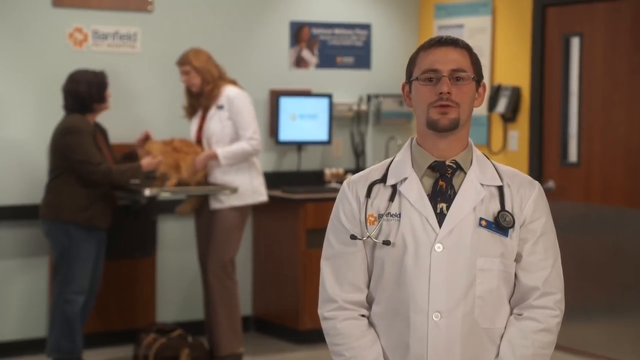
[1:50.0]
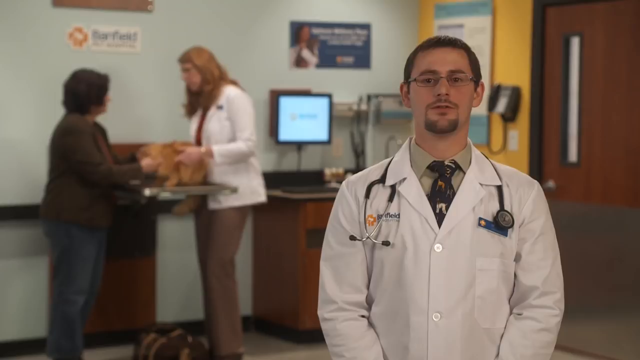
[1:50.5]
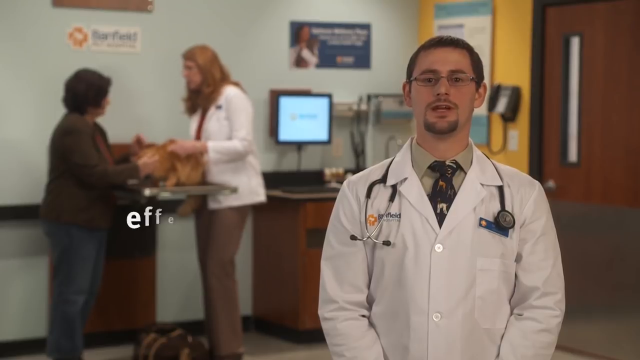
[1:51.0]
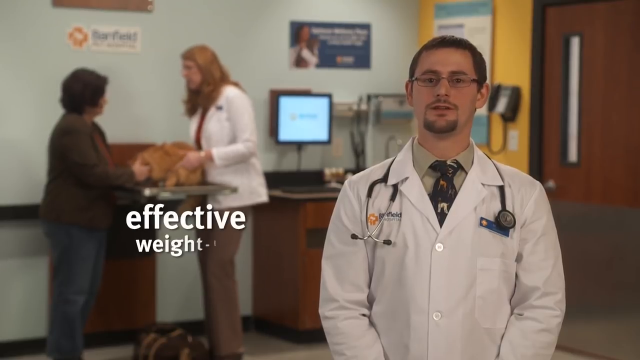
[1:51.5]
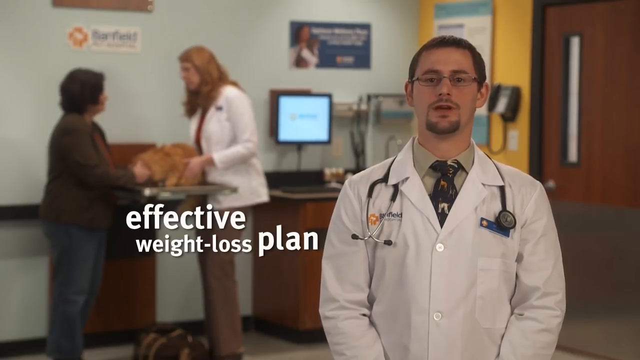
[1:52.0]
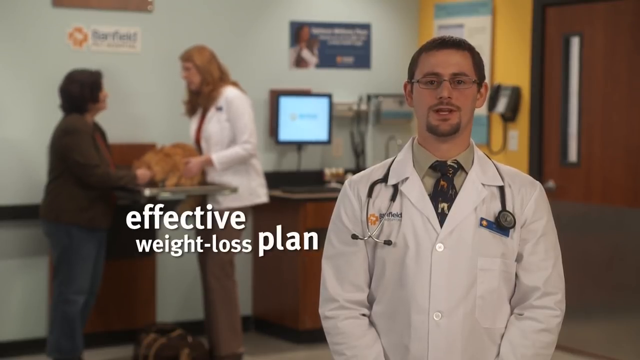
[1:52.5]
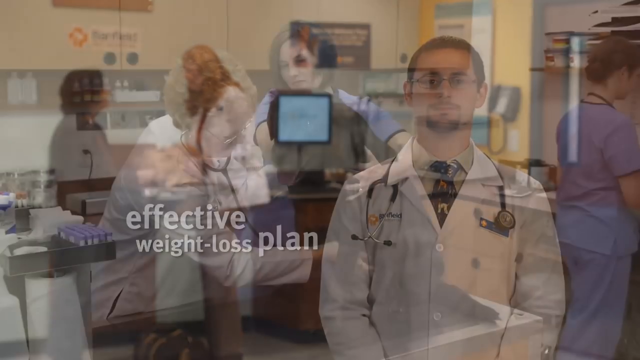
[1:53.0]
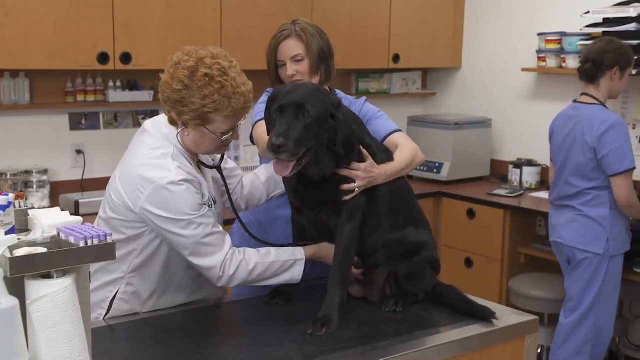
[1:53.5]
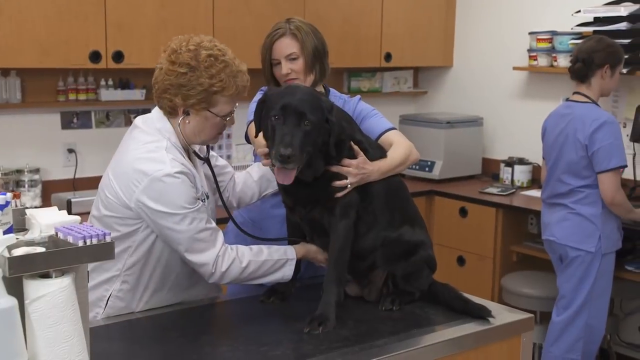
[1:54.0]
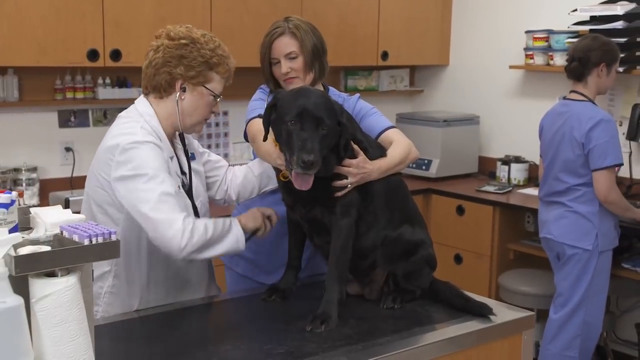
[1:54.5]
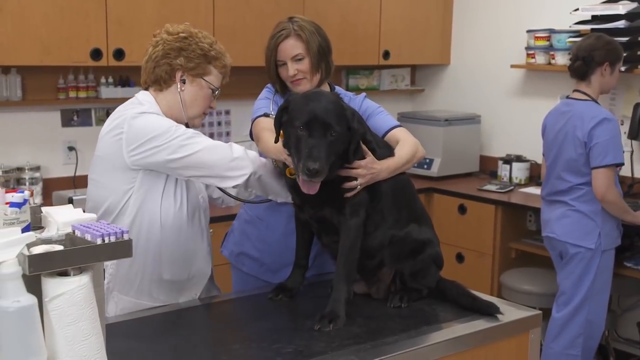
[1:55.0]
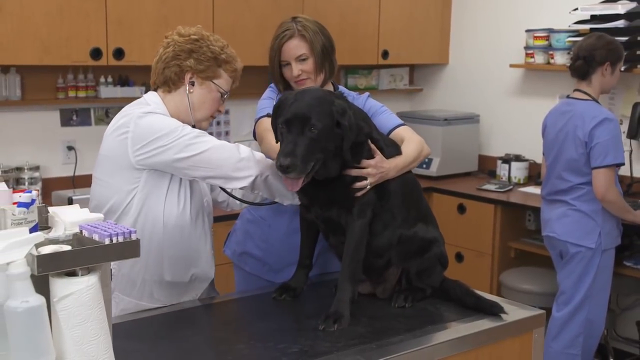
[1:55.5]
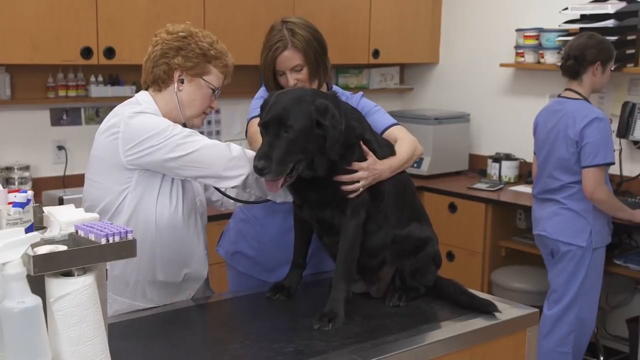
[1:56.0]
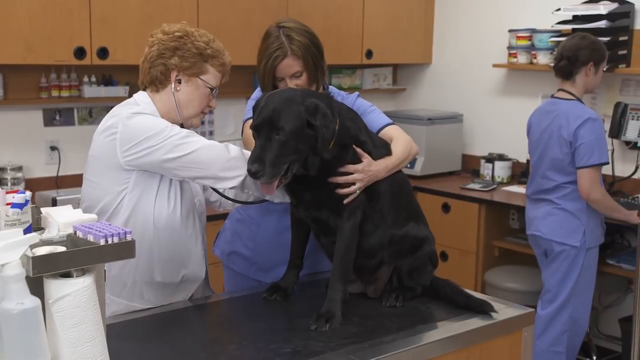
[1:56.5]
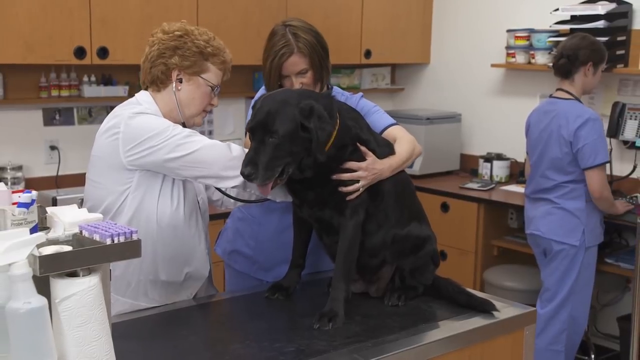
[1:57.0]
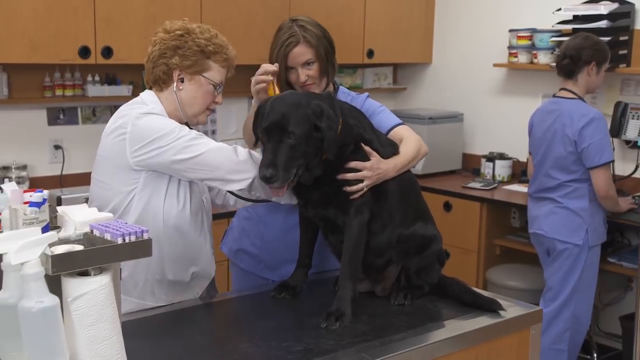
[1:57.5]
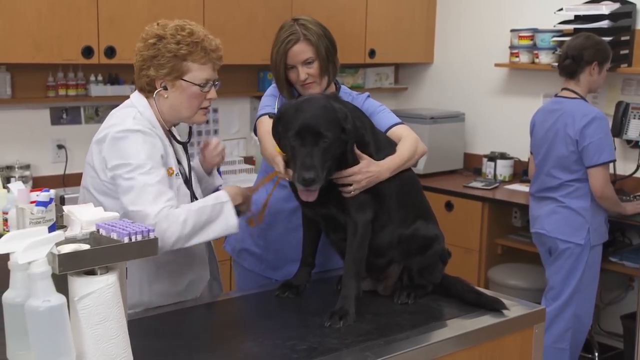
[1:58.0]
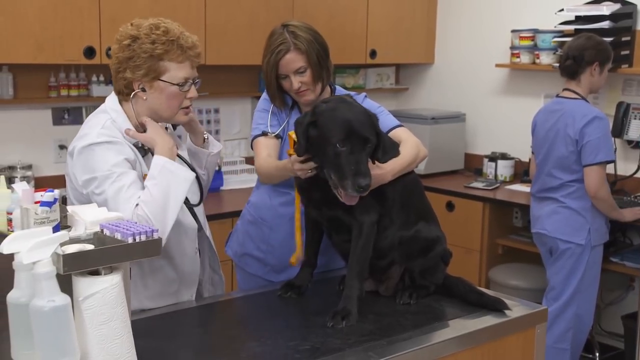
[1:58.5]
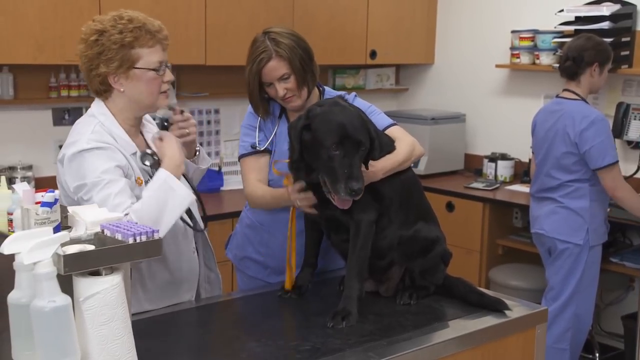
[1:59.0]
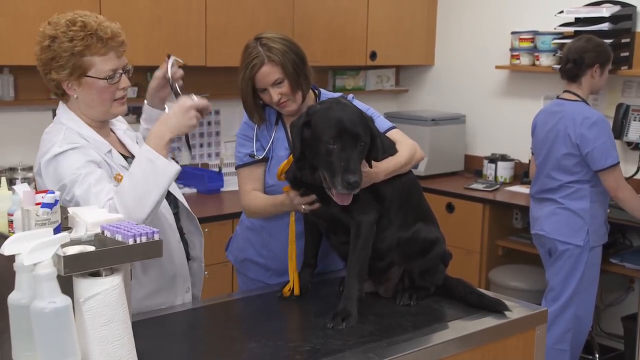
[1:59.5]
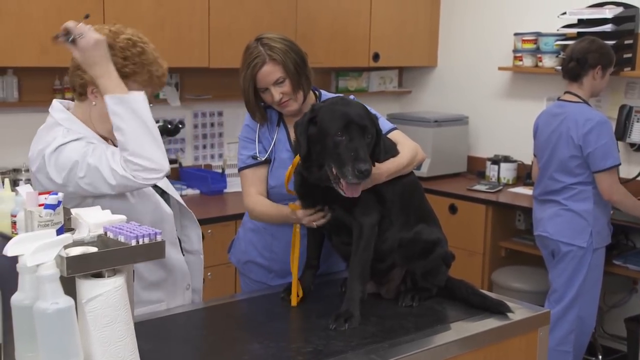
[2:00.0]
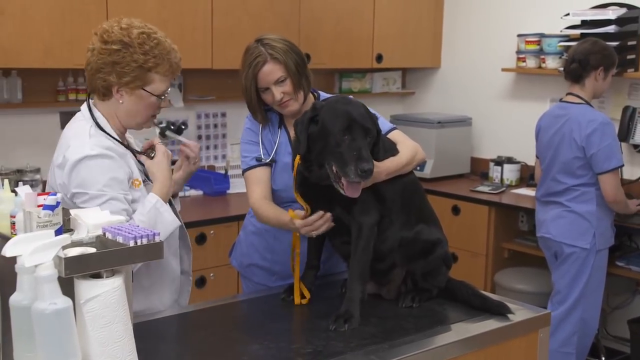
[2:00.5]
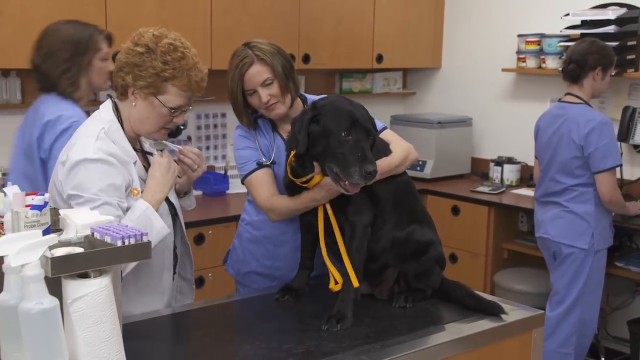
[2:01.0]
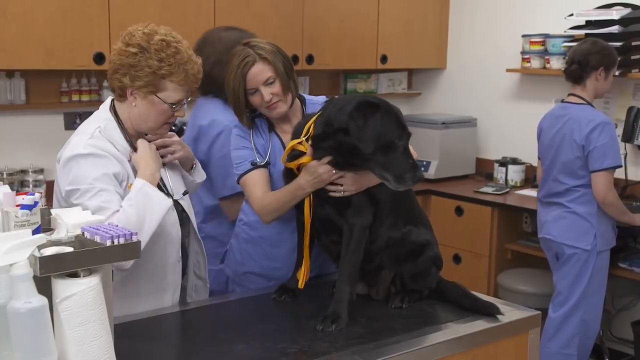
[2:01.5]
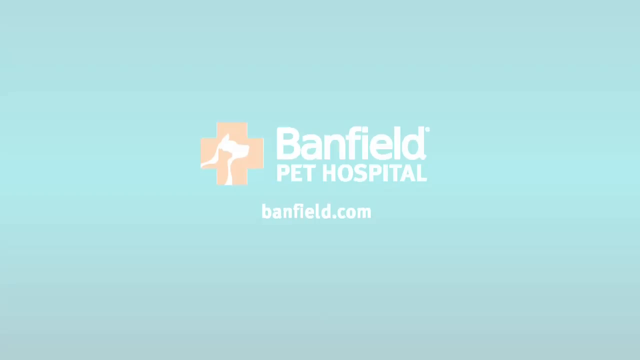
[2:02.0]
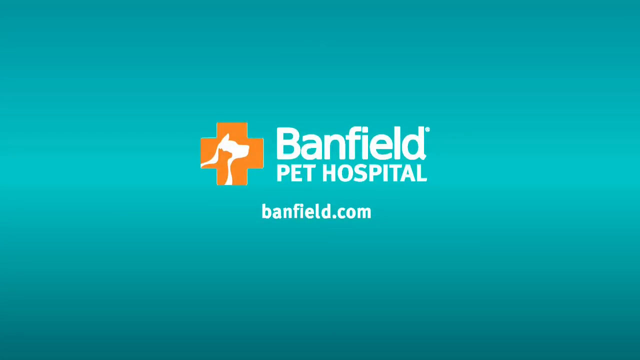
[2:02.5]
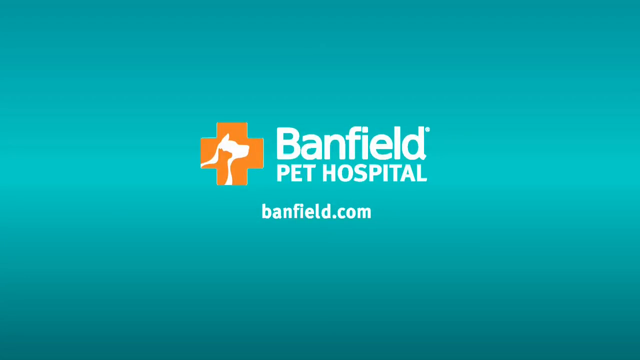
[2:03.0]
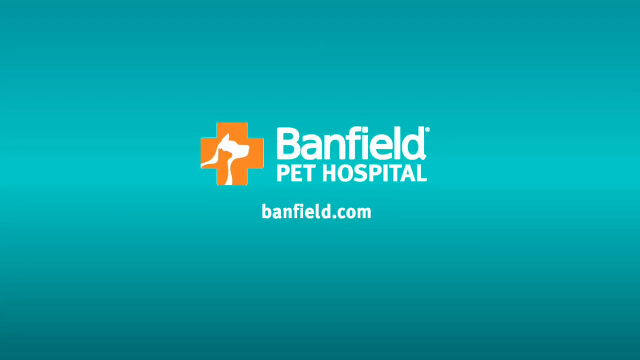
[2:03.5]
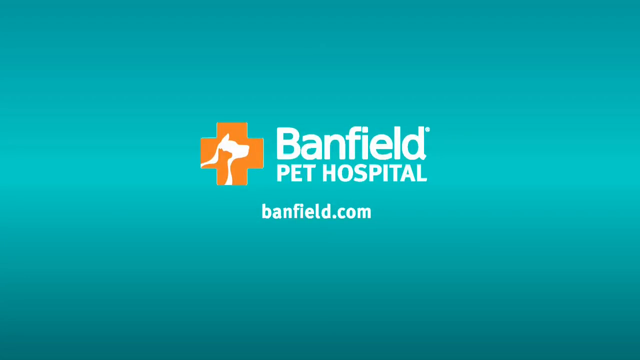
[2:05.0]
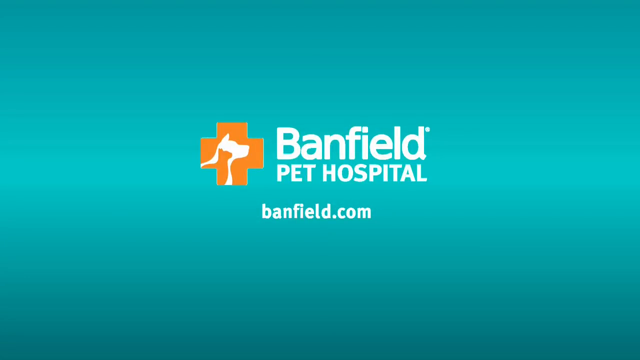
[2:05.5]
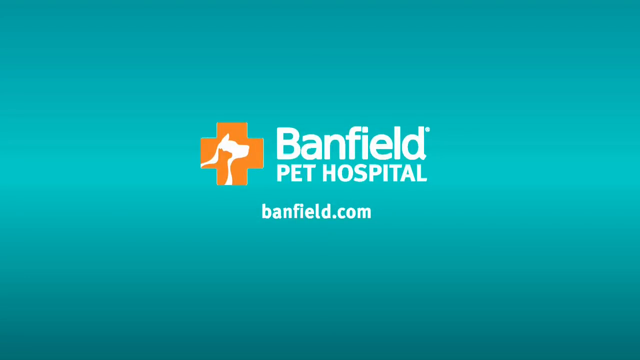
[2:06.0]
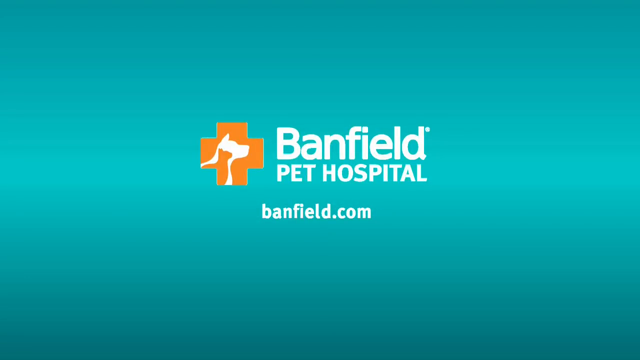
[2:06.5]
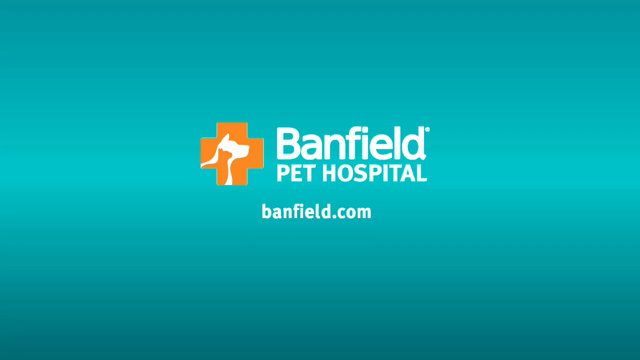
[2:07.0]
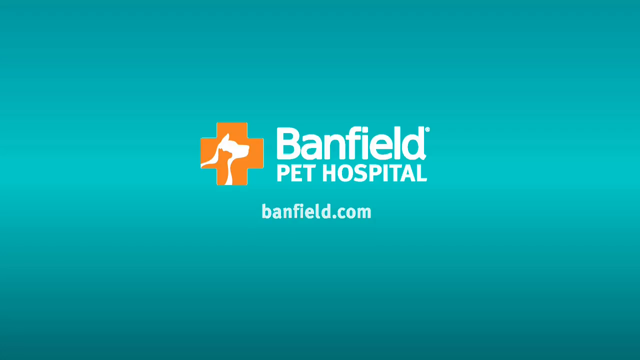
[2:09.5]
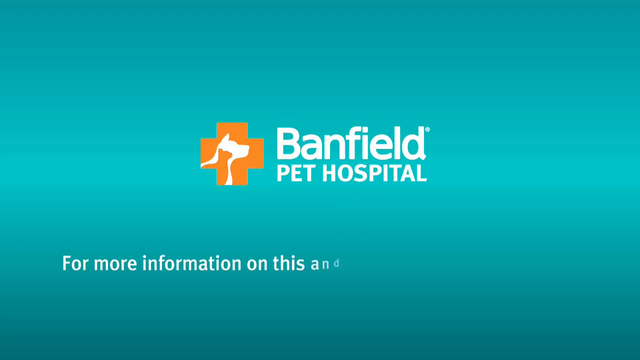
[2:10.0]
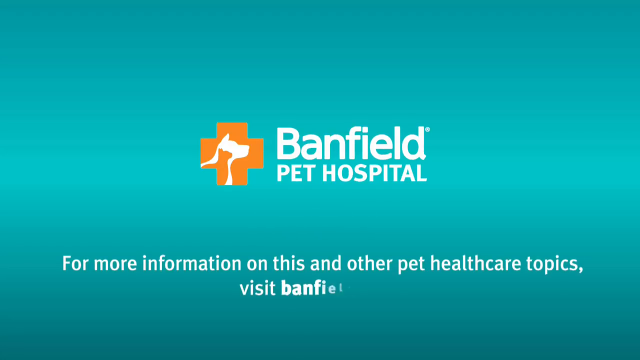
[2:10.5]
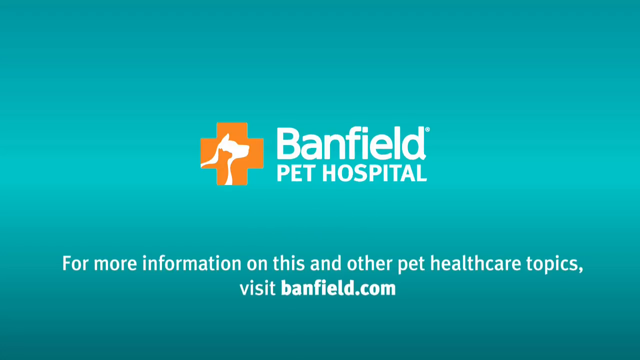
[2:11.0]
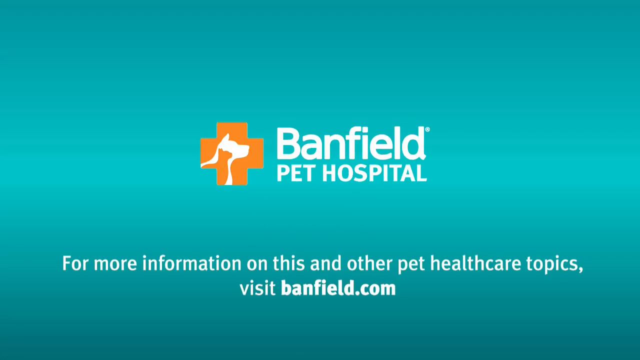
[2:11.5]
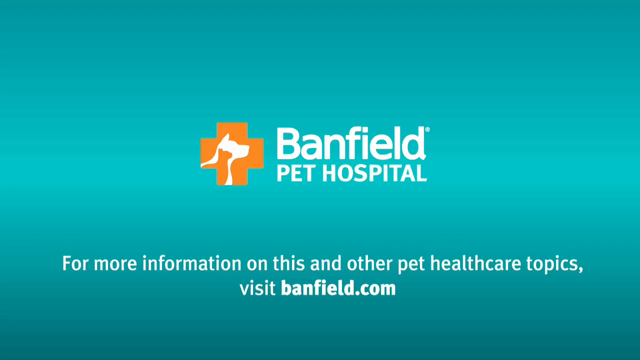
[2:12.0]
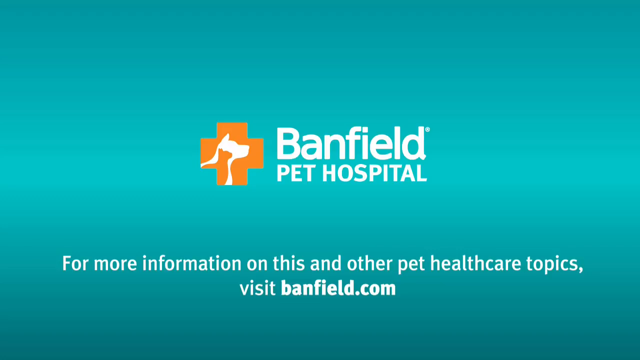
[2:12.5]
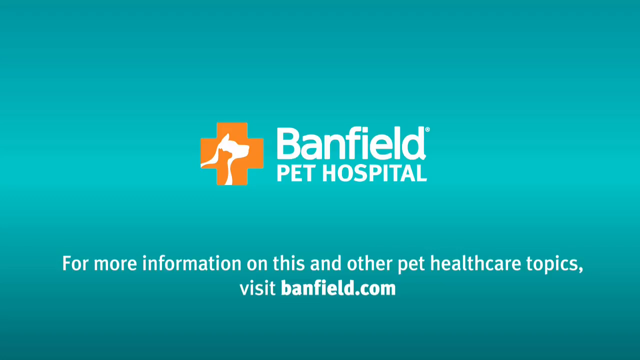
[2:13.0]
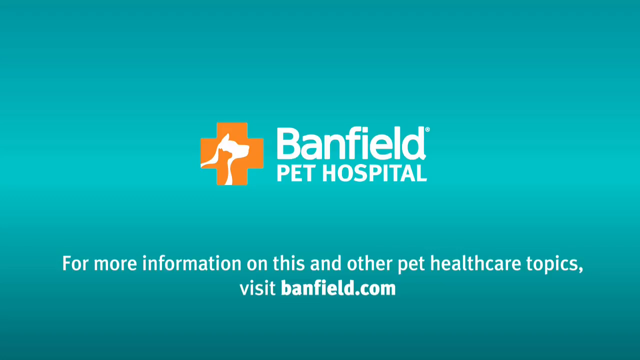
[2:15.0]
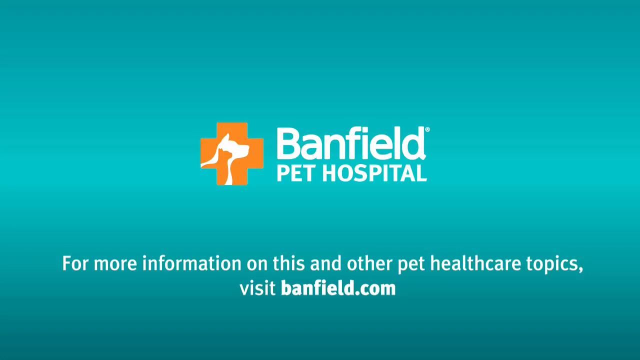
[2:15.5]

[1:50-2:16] The video is an advert for Benfield Pet Hospital and directs viewers to www.benfield.com for more information on this and other pet health care topics.